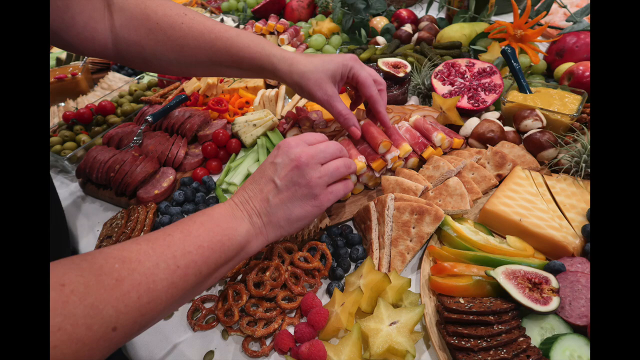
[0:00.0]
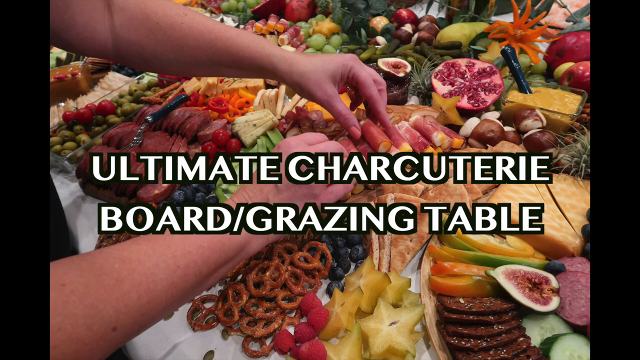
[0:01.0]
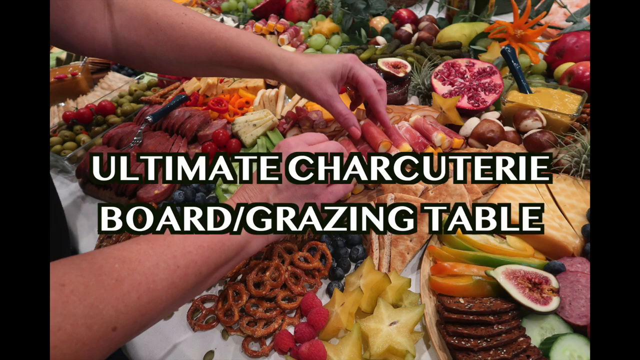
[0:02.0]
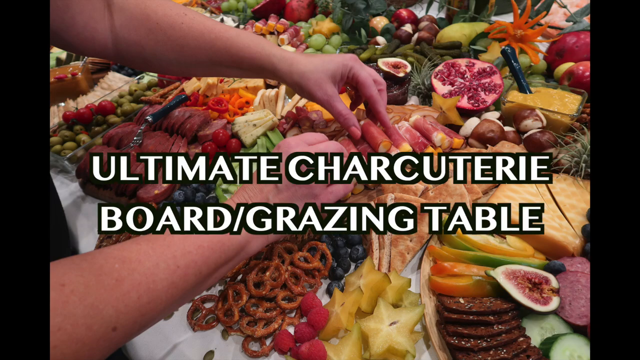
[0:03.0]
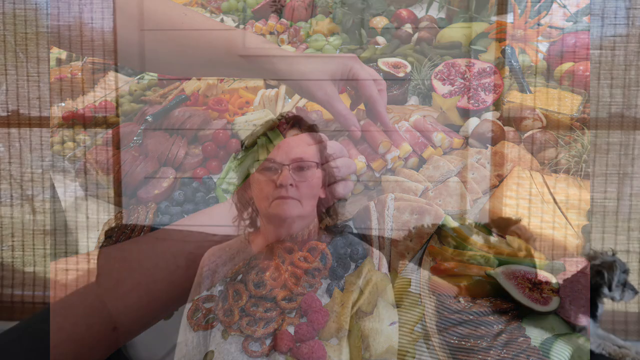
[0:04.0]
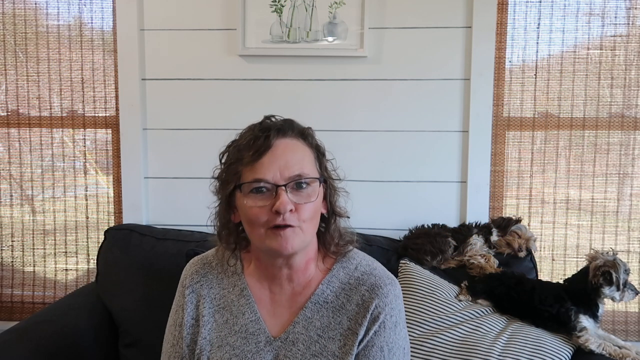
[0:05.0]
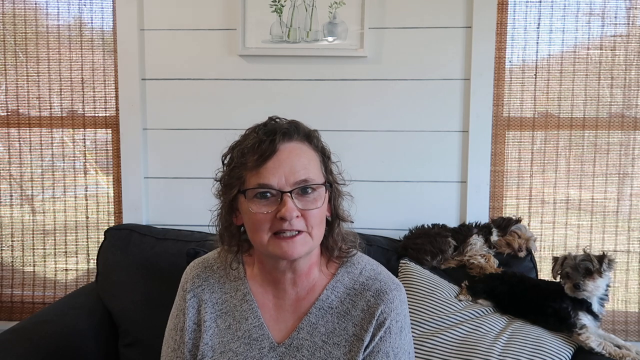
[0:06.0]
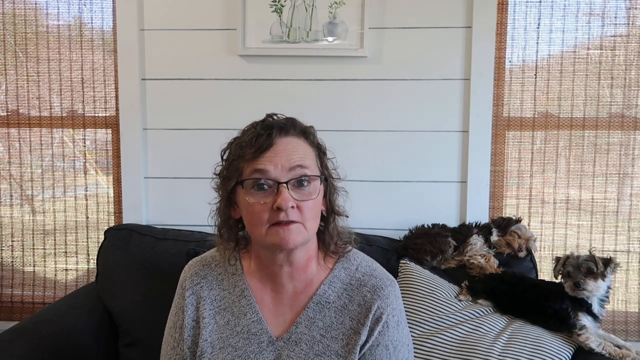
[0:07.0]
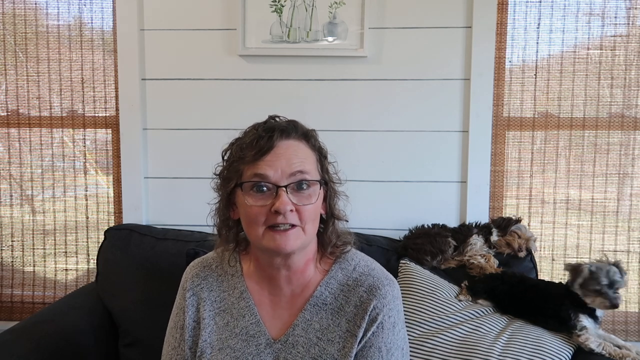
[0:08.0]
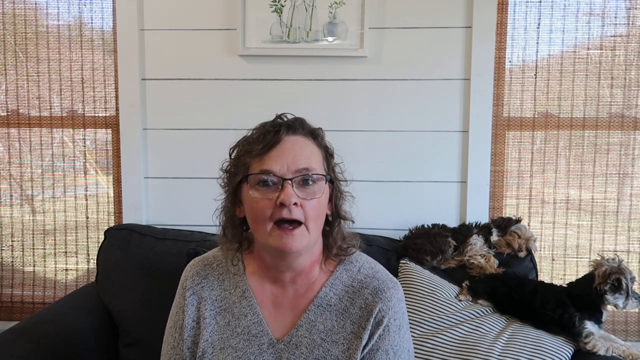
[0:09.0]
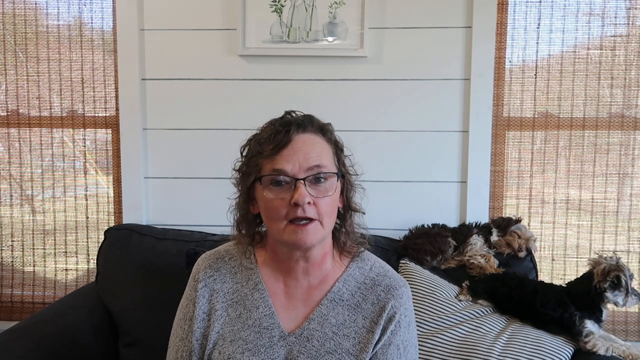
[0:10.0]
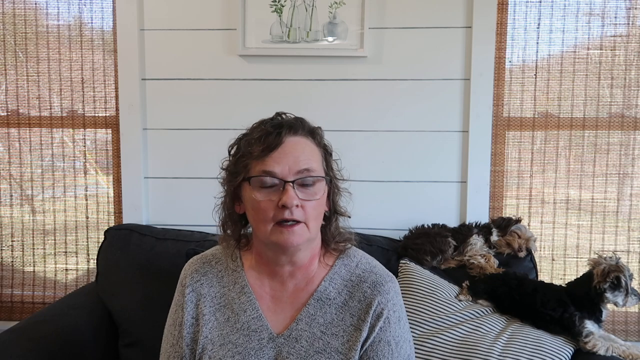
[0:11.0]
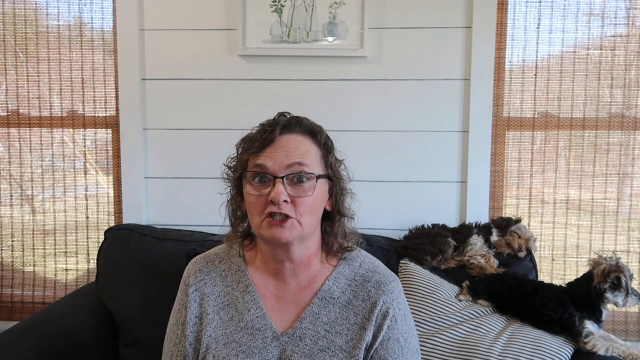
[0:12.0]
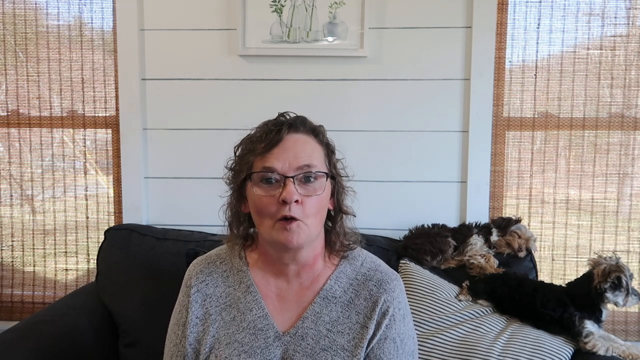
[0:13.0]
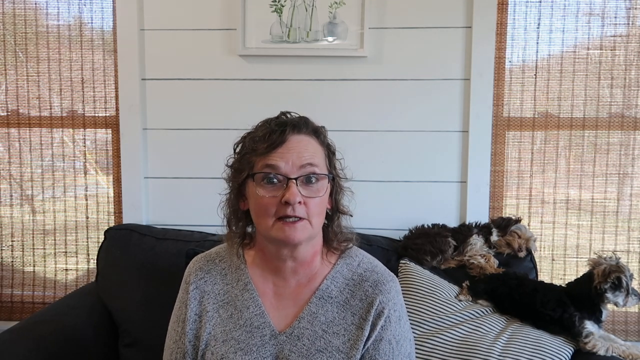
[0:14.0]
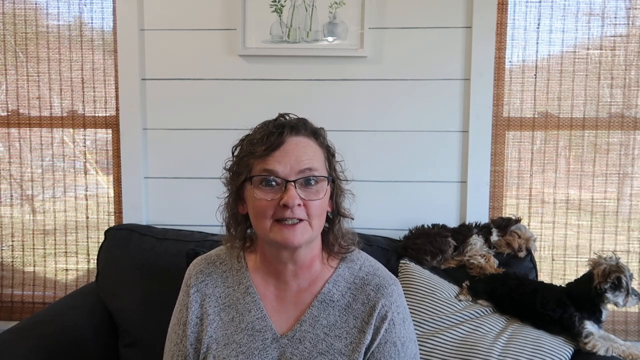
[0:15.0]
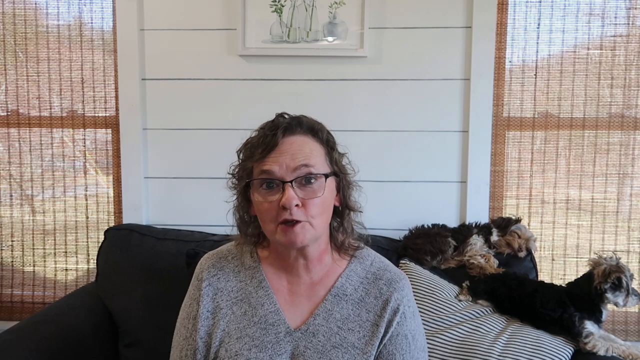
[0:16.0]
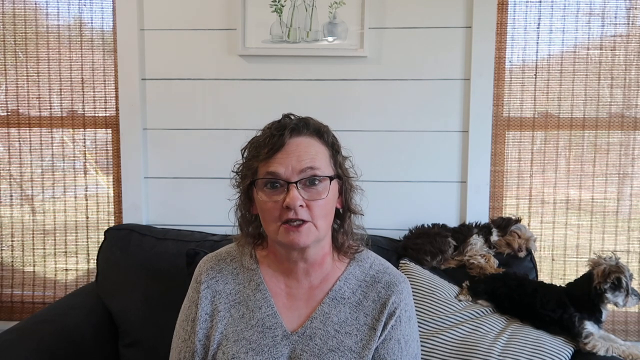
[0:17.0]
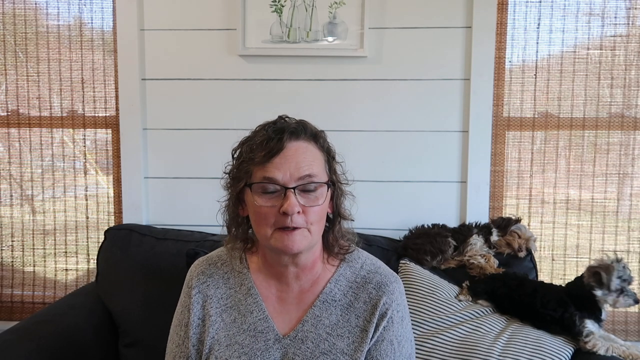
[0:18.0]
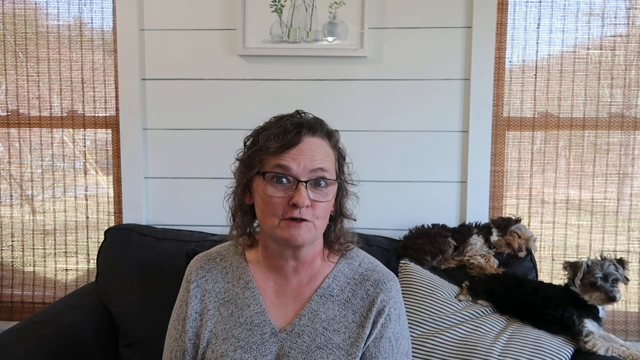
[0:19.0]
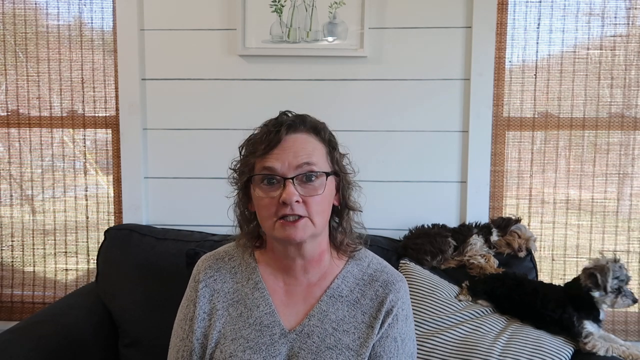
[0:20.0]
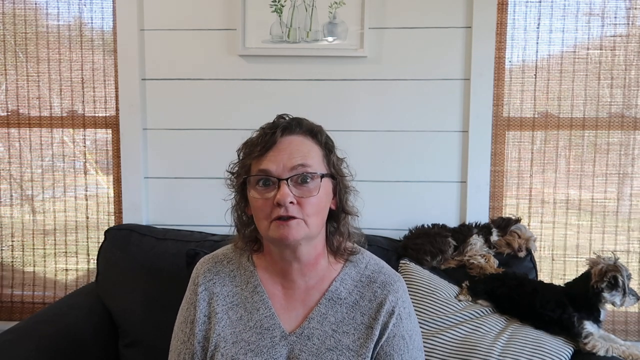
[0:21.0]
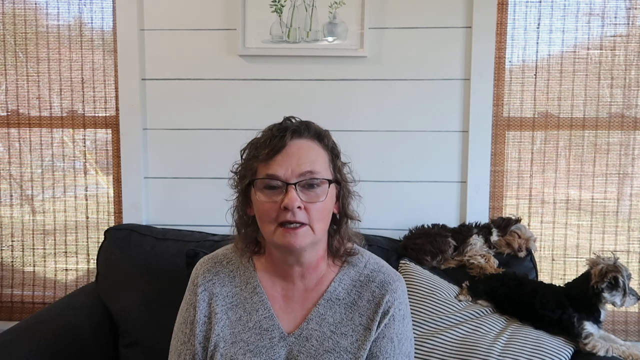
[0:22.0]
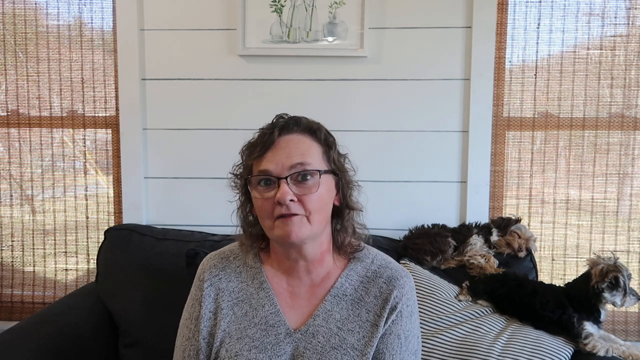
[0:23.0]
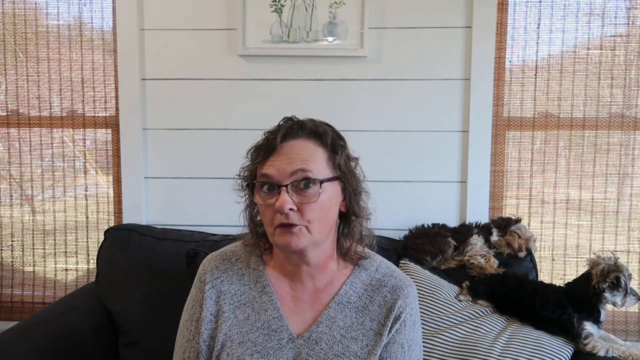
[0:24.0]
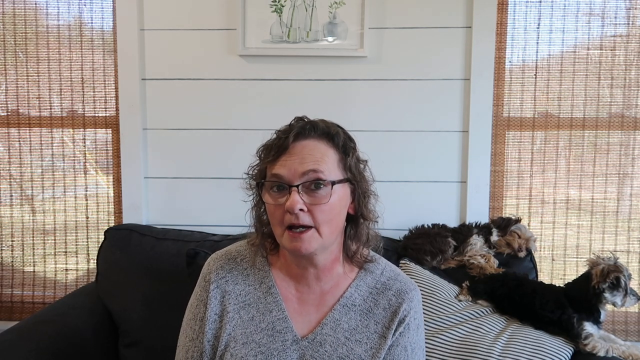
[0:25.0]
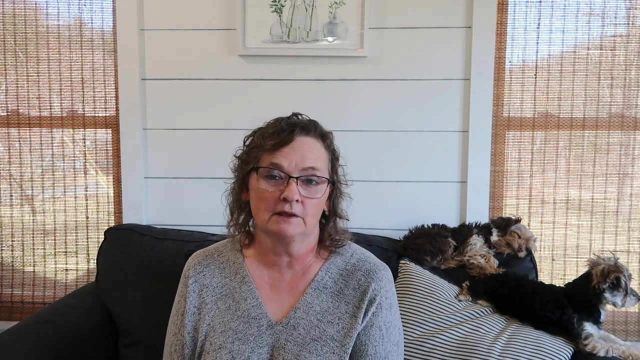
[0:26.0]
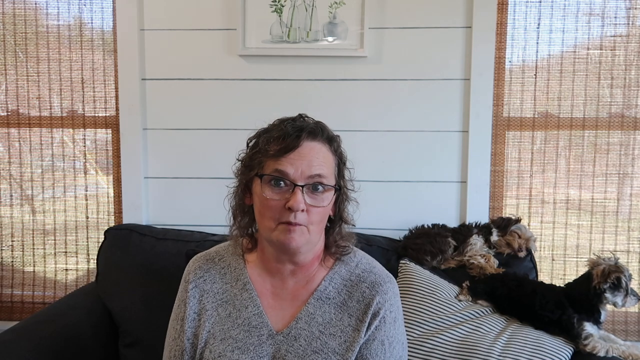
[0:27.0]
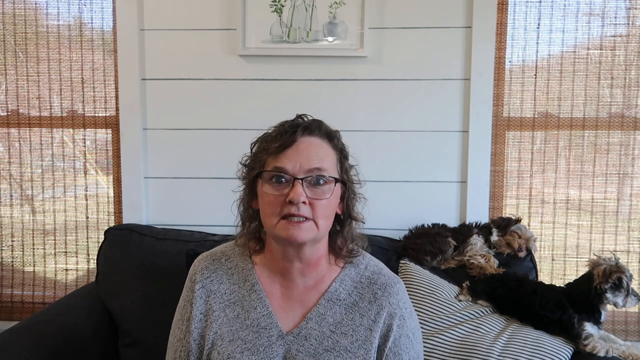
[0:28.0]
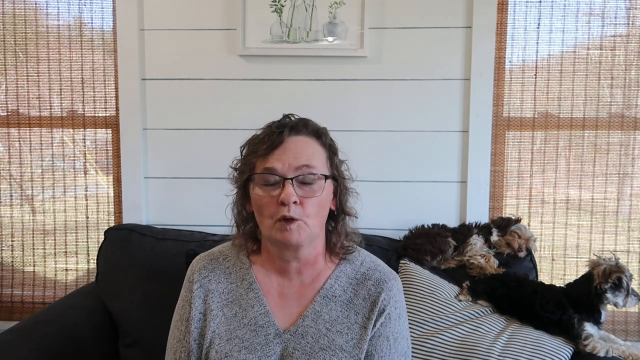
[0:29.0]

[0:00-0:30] The video starts with an image of a hand and a platter of various types of food: crackers, a pomegranate that has been sliced open, chunks of sausage, dills, a knife inside a bowl, and sliced pineapple. White text on the screen reads "ultimate charcuterie board for / grazing table". The video then transitions to a woman seated on a black couch. Her hair is dark brown and she wears glasses and a gray v-neck. Two puppies are lying on the couch, and there is a white and black striped pillow at the back. There is a frame on the wall, and the white wall is partitioned by two brown window blinds. The woman leans forward toward the screen as her lips move; she slightly moves her head and her eyebrow goes up. One of the puppies looks straight at the screen and turns its head.